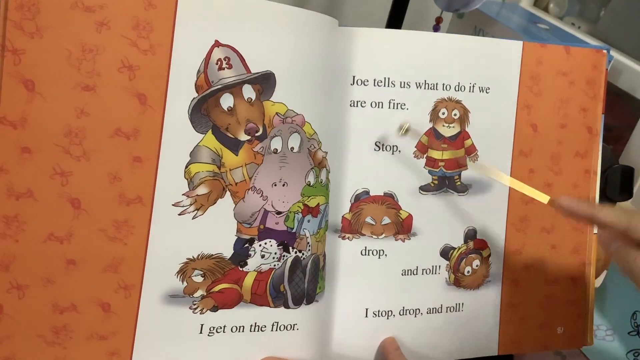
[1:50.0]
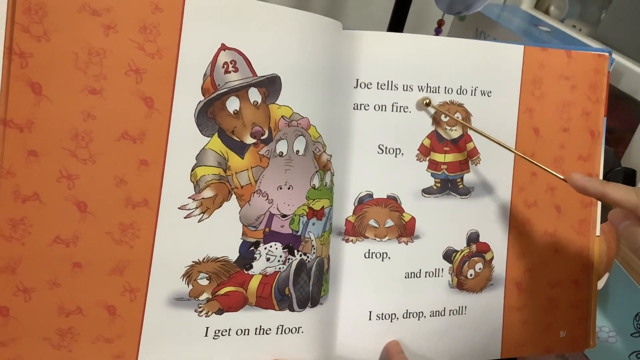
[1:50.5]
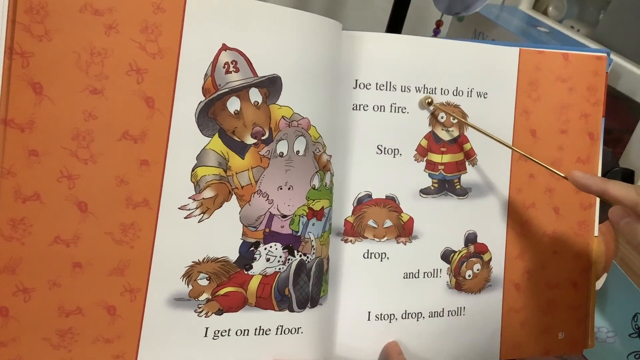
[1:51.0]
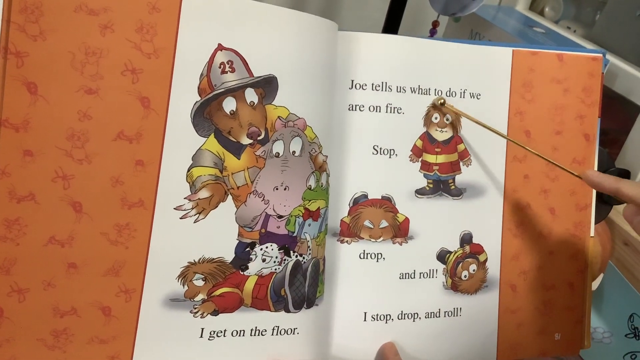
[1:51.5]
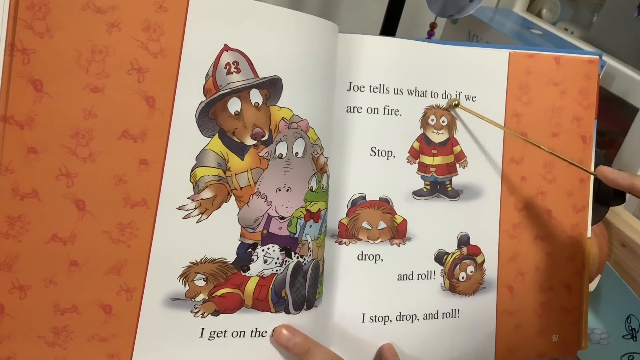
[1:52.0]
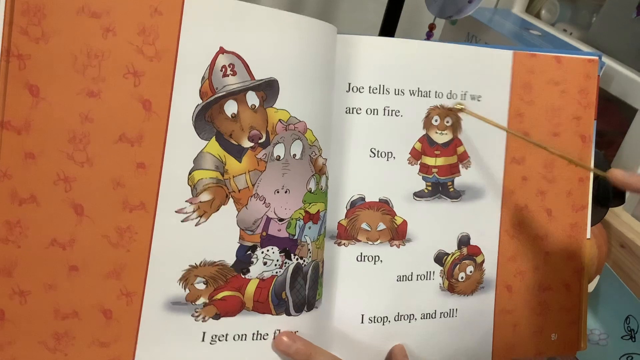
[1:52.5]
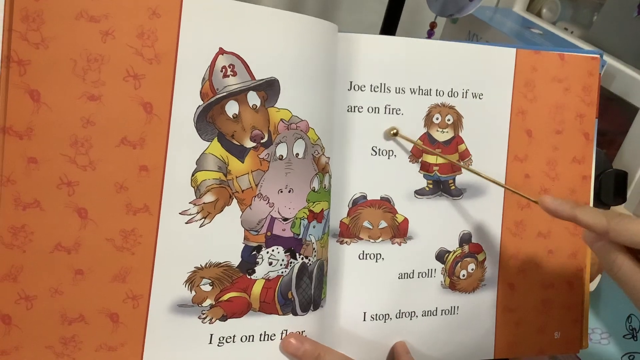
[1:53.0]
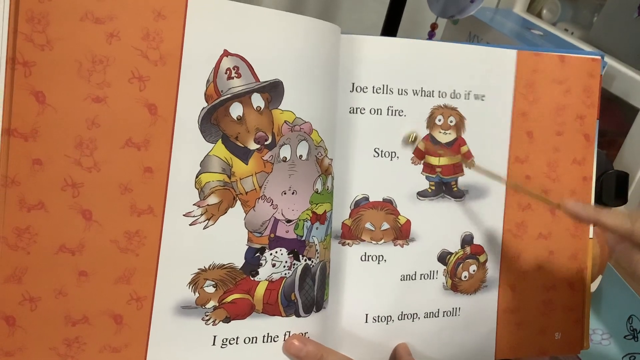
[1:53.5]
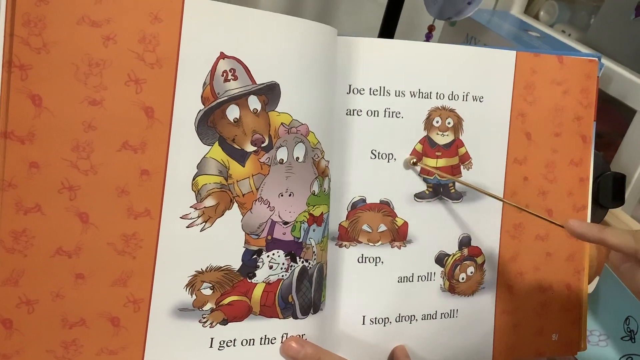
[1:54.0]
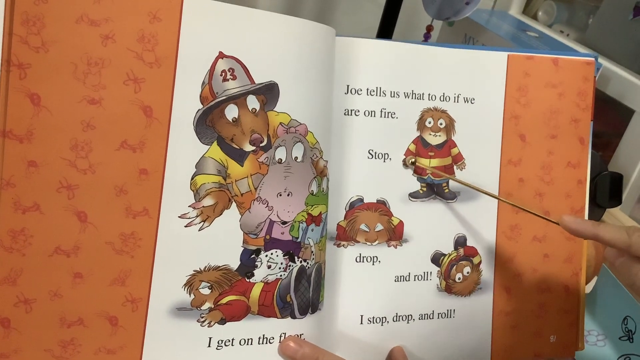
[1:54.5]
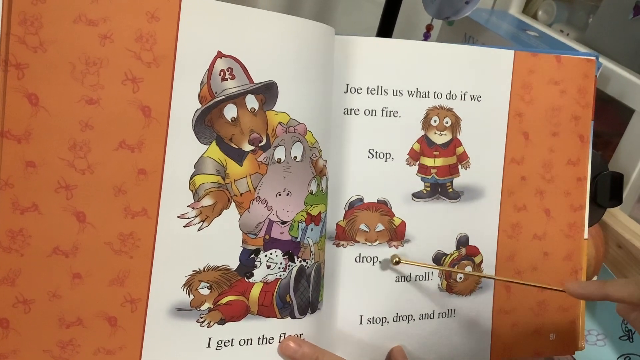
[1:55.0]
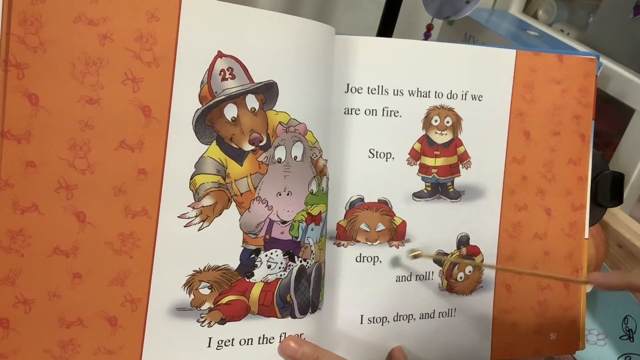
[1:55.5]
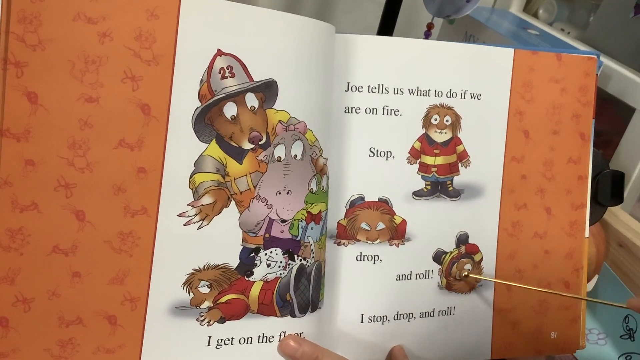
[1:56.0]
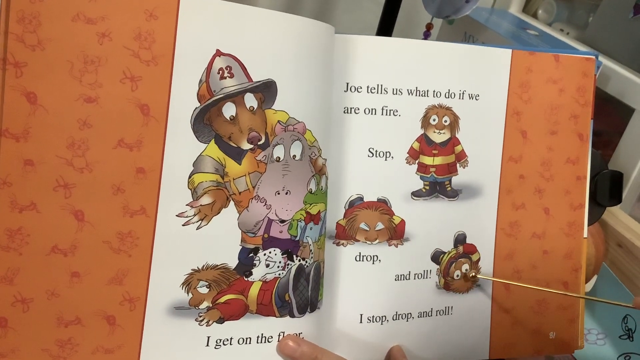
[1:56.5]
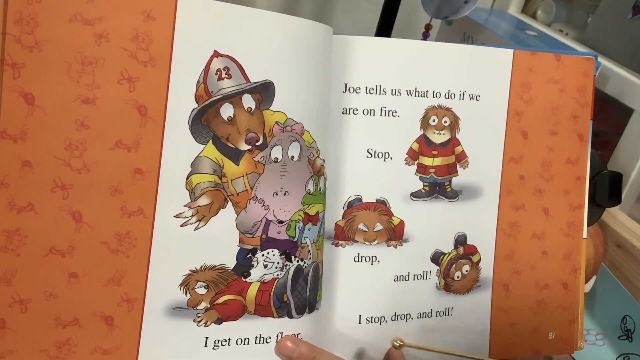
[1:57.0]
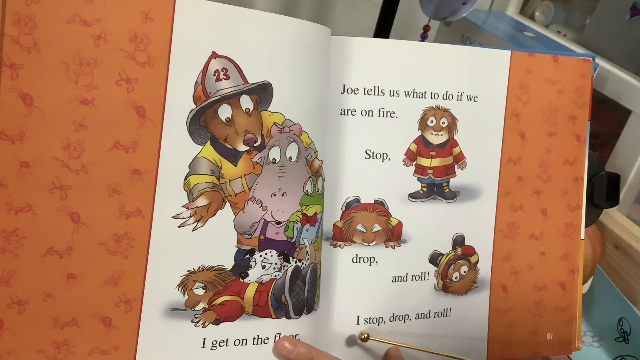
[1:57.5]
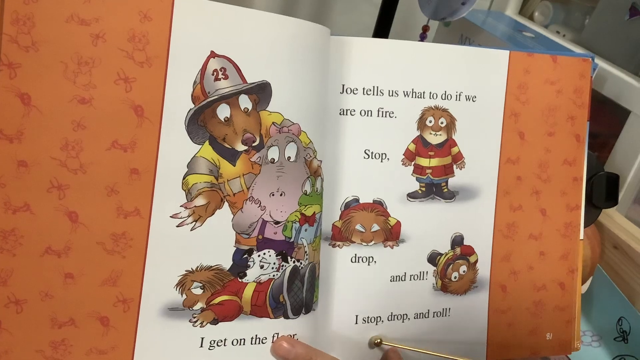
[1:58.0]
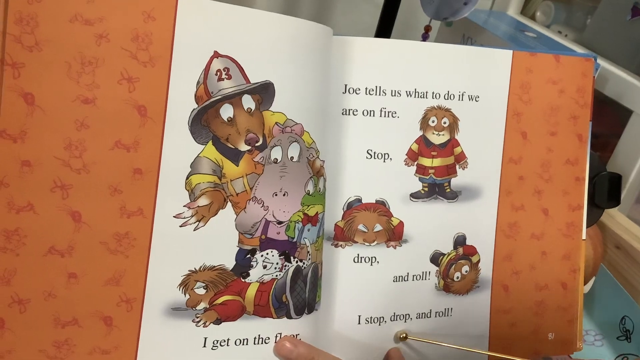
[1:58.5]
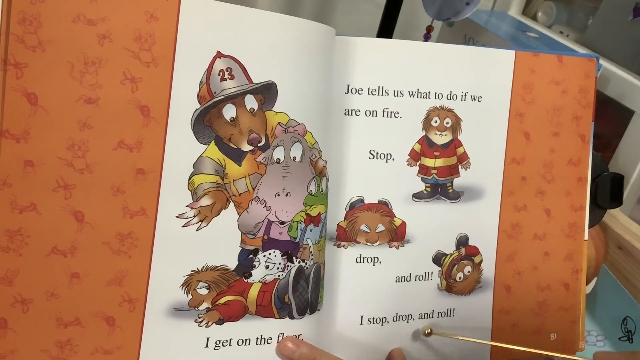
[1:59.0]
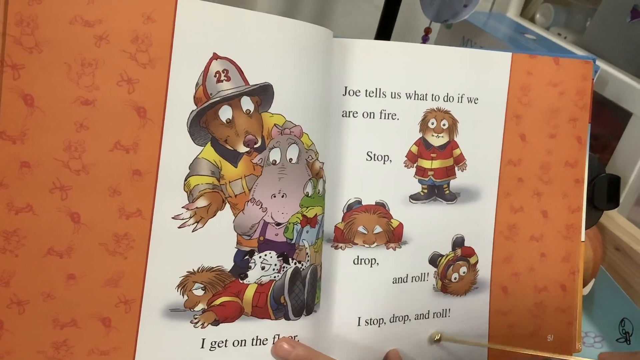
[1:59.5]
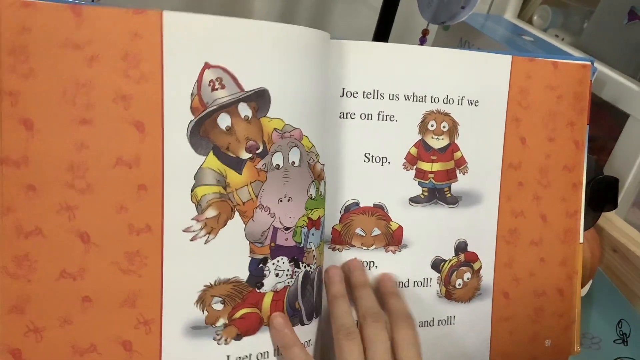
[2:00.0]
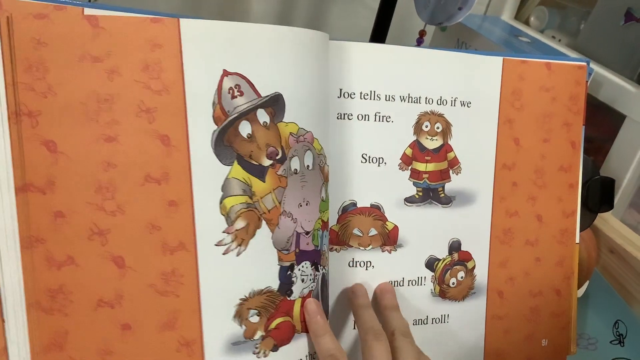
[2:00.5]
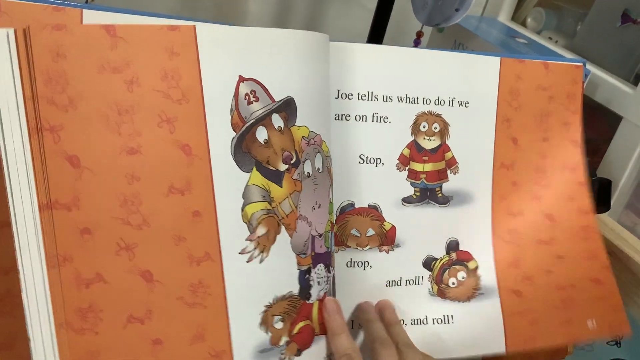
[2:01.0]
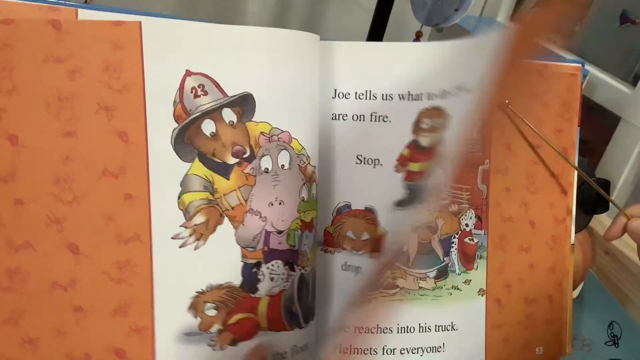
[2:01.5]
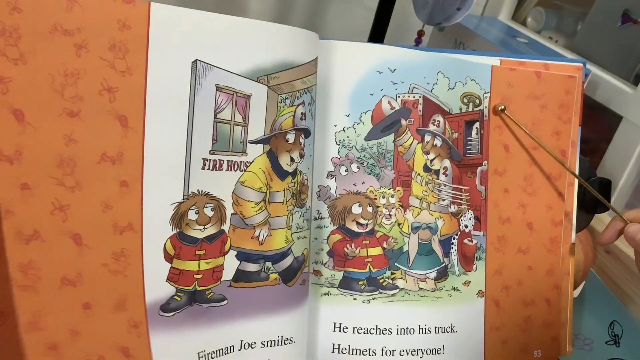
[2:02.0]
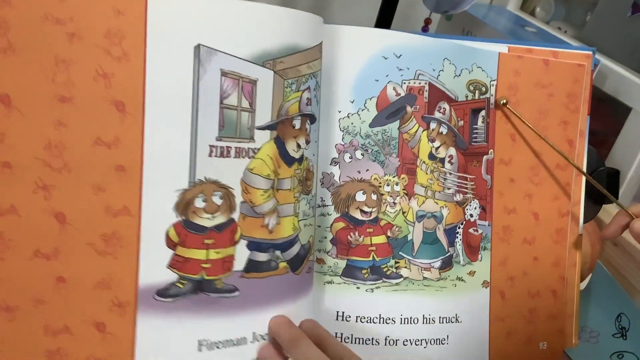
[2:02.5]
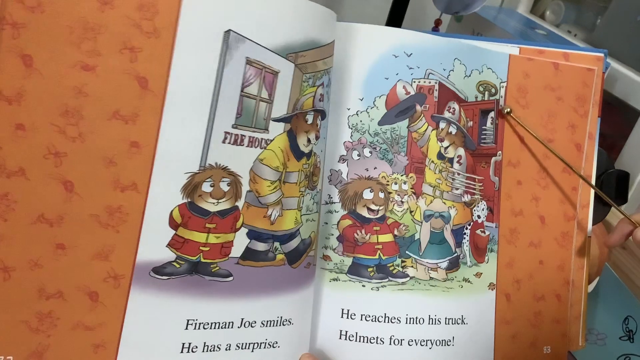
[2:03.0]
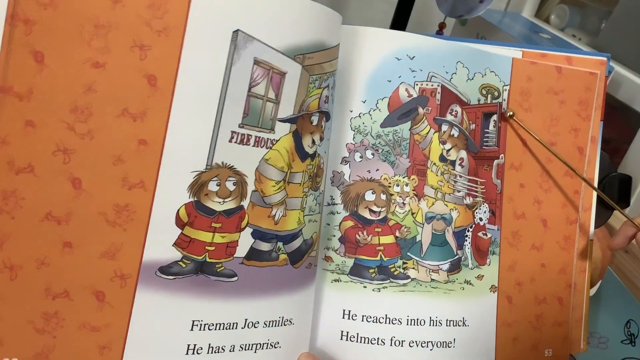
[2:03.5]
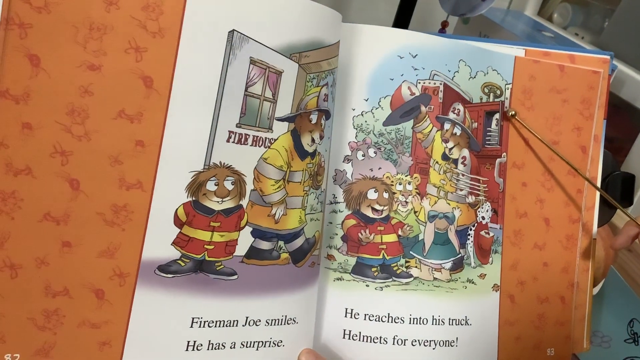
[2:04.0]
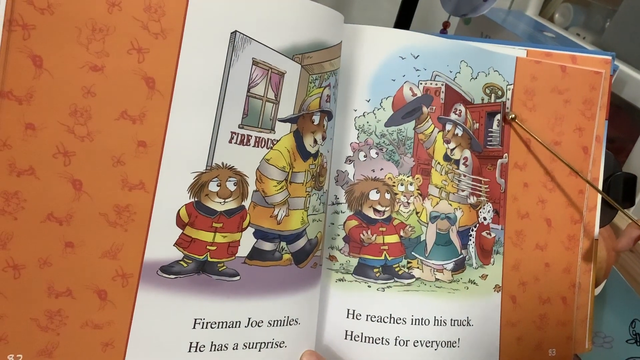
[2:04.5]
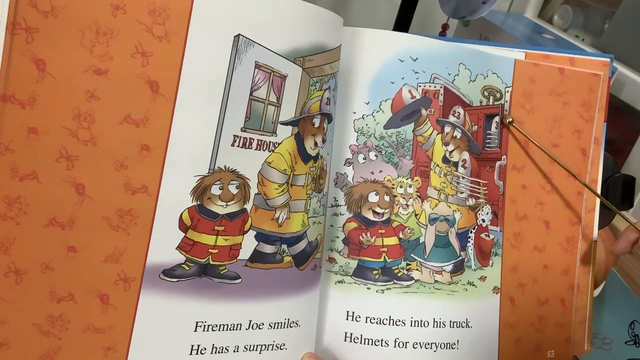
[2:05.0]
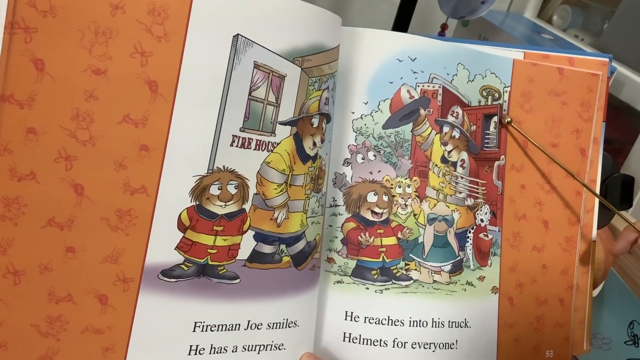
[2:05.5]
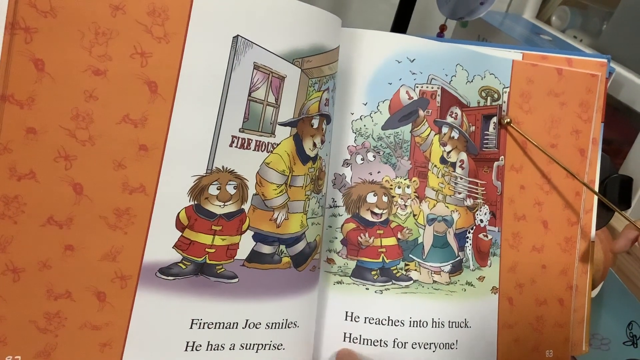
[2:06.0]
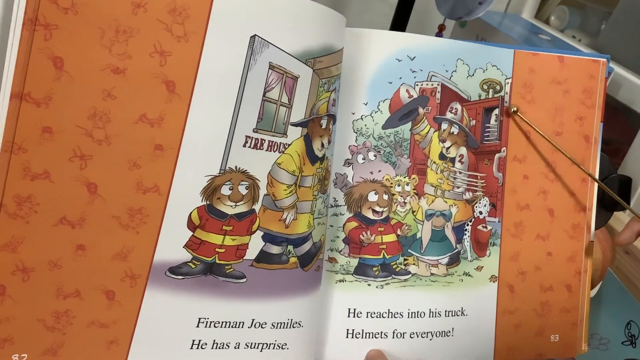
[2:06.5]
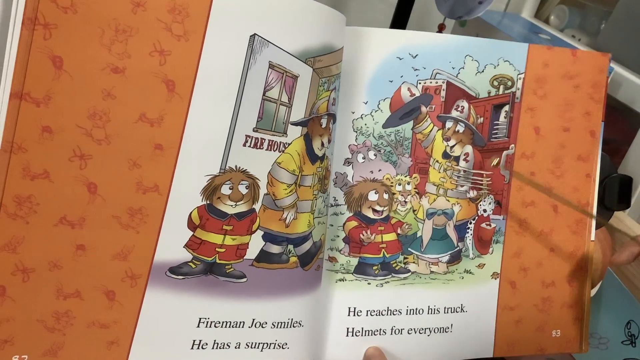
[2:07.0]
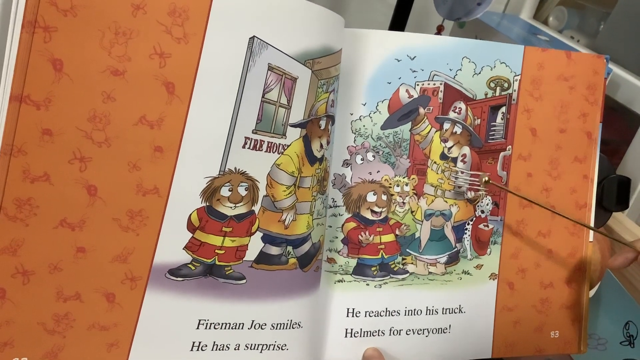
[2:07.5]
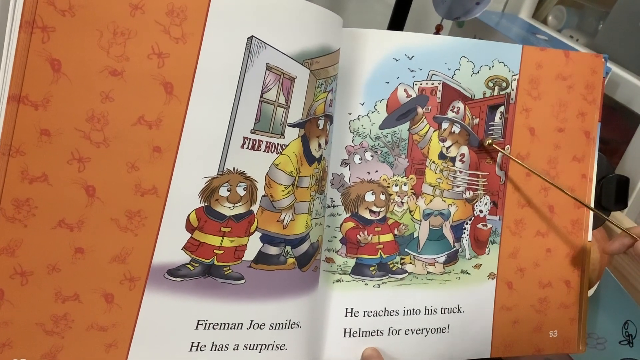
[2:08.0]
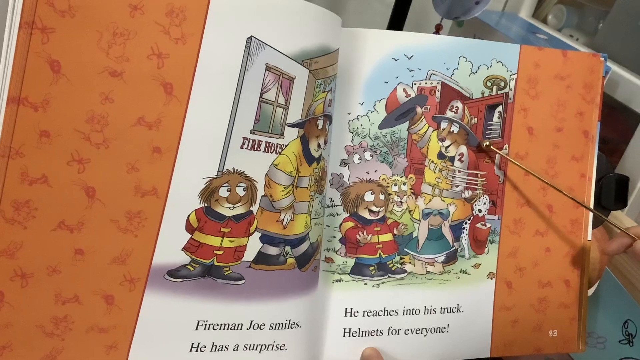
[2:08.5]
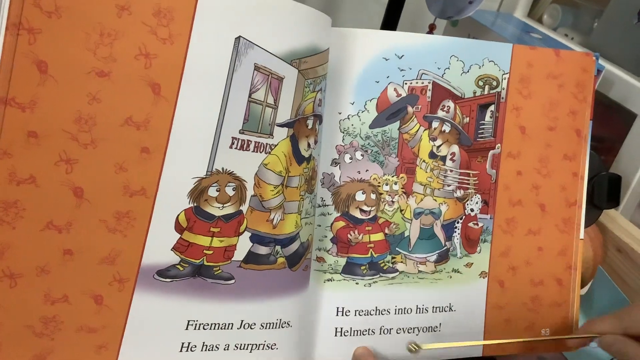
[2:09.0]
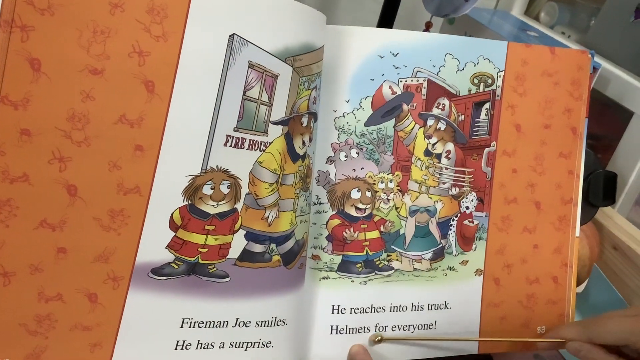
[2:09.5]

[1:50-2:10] The next page is set in the firehouse, with the dog child and the fireman bear walking out the front door, which says "firehouse" on it; the walls are white. The following page is set outside in front of the fire truck, with six characters: the dog boy, the hippo child, the tiger child, the rabbit child, the Dalmatian dog and the fireman bear. The text on the screen says, "he reaches into his truck, helmets for everybody." The dog's top is red, the rabbit wears a green dress, the tiger wears a lime green t-shirt and dark green trousers, and the hippo has a pink bow on her head. It is a sunny day, with birds in the sky and trees all around them. The fire truck is red with hoses visible, and the Dalmatian dog is hiding behind the fireman.